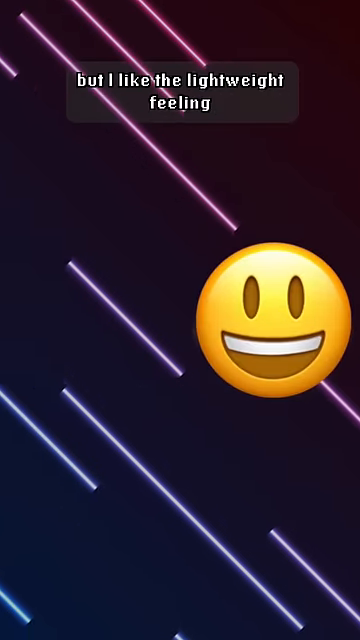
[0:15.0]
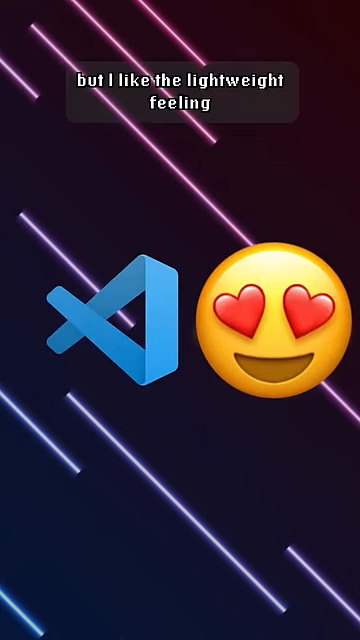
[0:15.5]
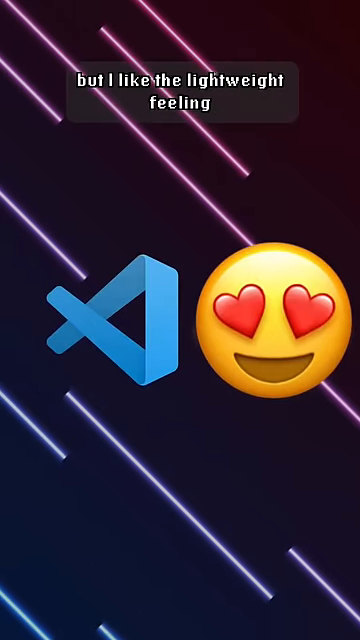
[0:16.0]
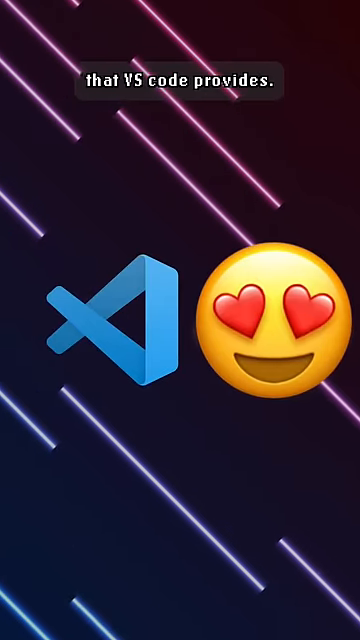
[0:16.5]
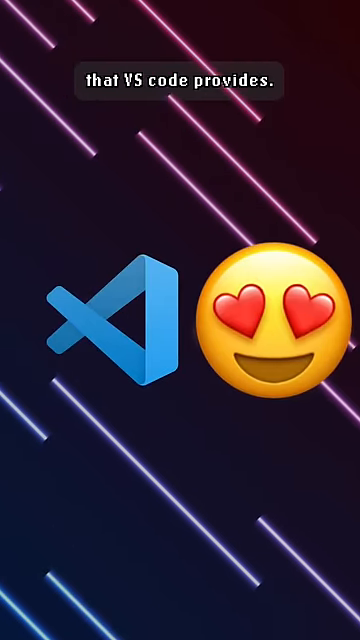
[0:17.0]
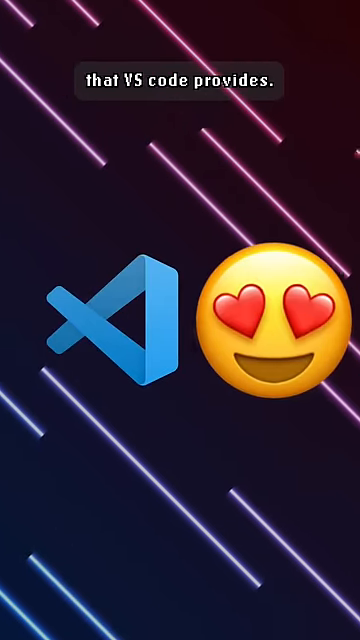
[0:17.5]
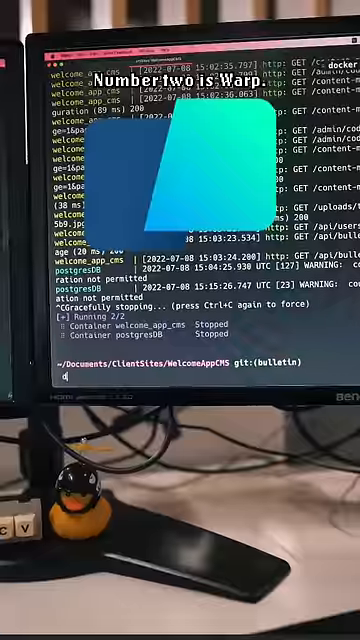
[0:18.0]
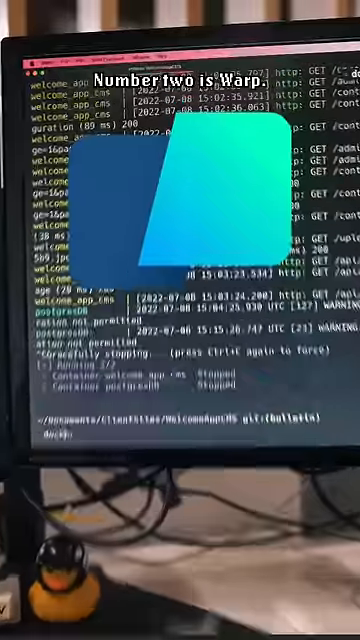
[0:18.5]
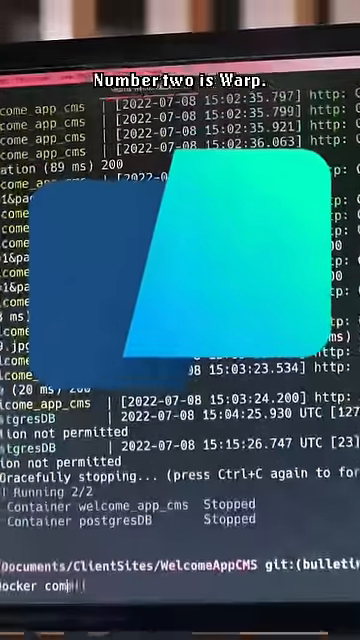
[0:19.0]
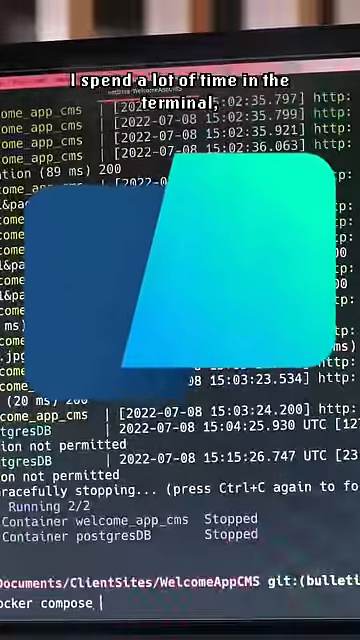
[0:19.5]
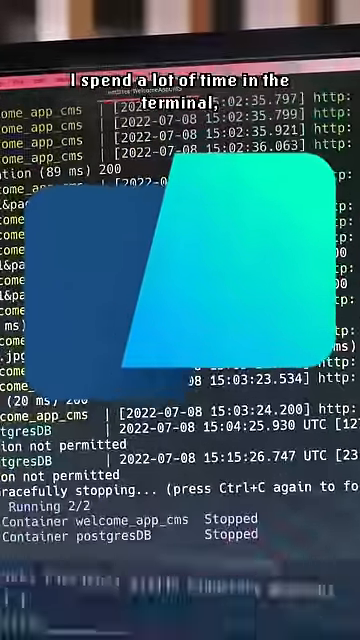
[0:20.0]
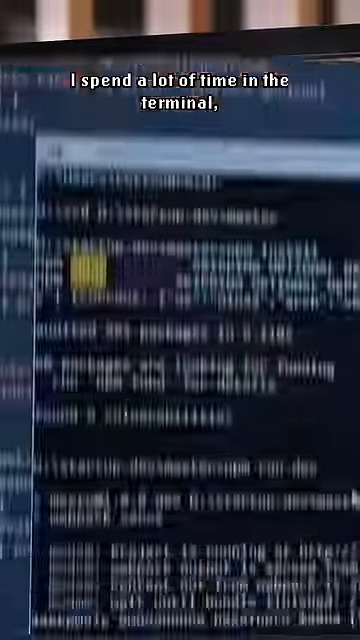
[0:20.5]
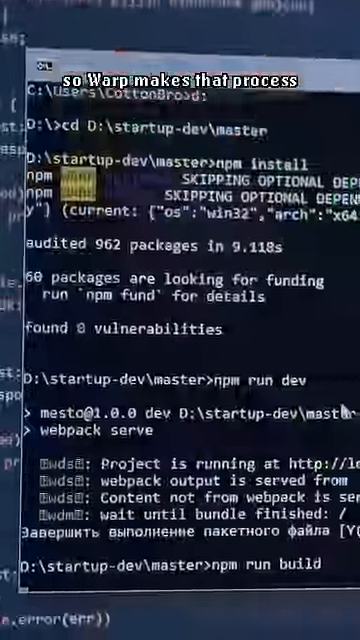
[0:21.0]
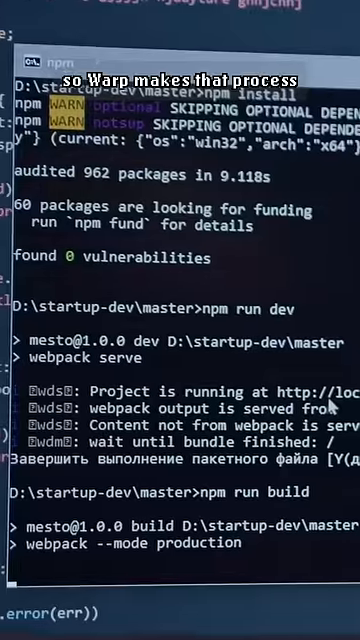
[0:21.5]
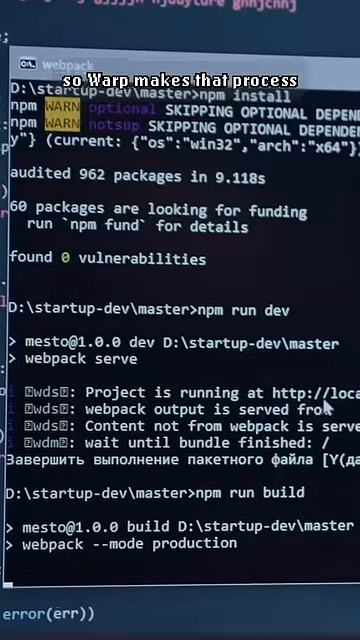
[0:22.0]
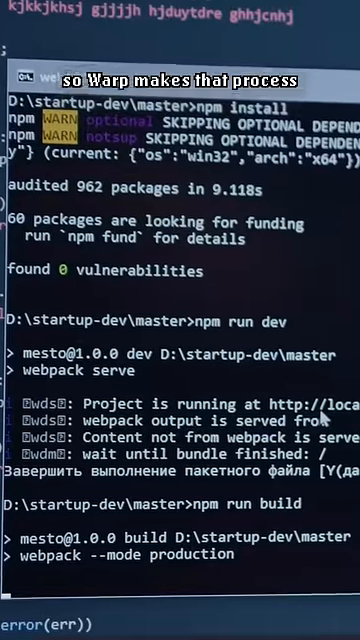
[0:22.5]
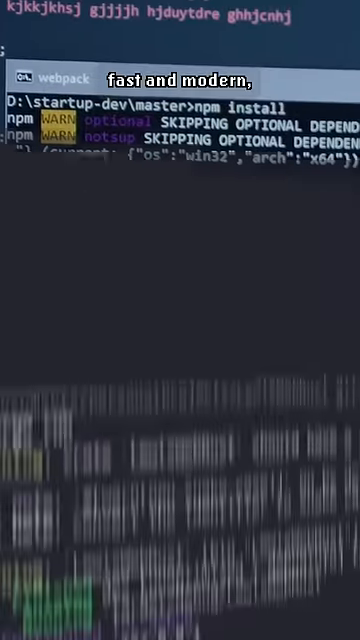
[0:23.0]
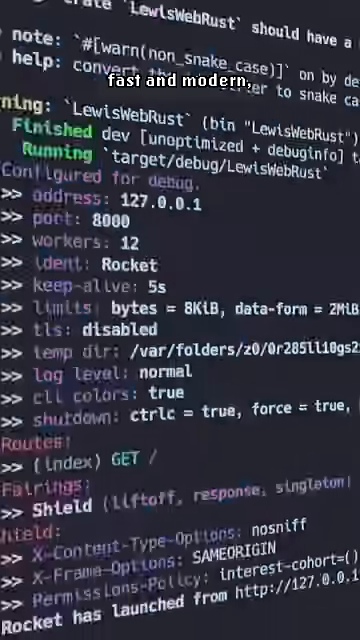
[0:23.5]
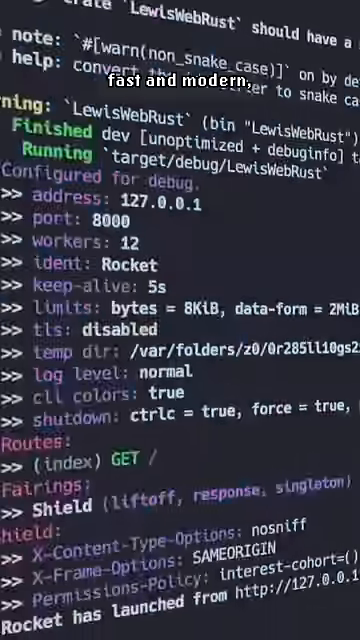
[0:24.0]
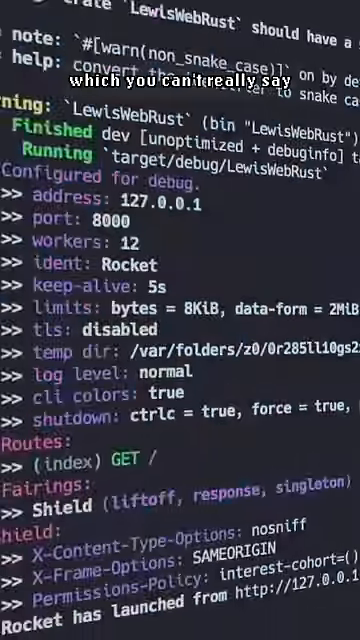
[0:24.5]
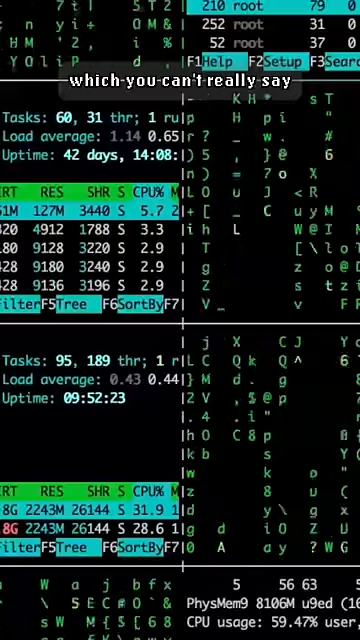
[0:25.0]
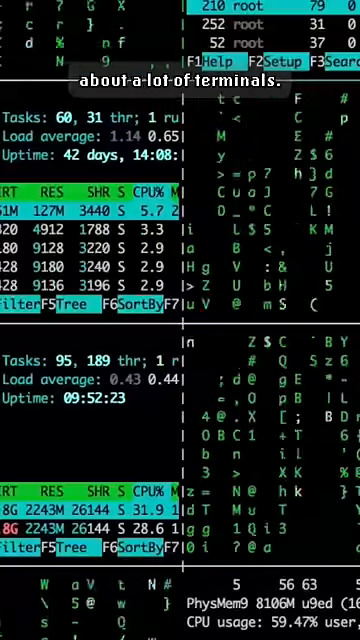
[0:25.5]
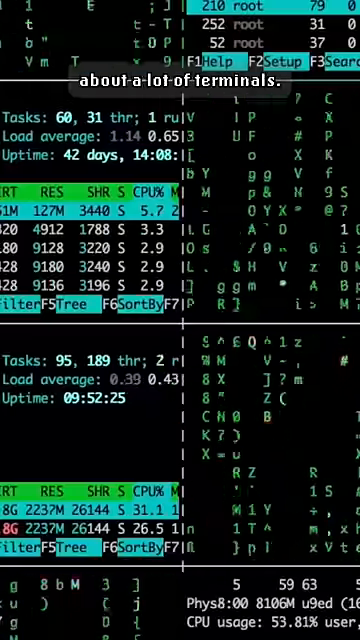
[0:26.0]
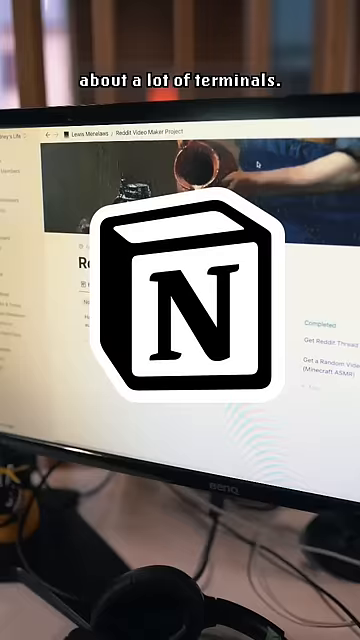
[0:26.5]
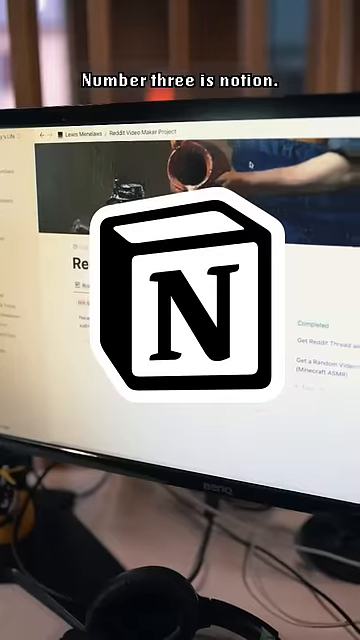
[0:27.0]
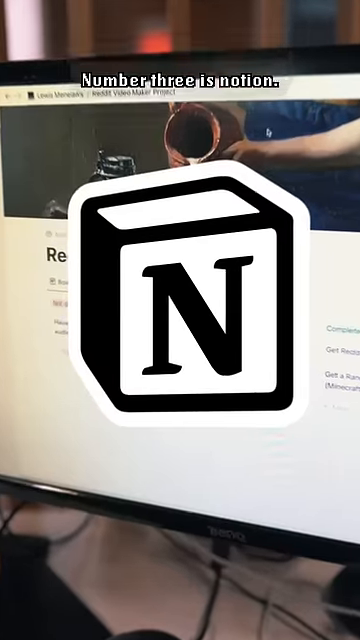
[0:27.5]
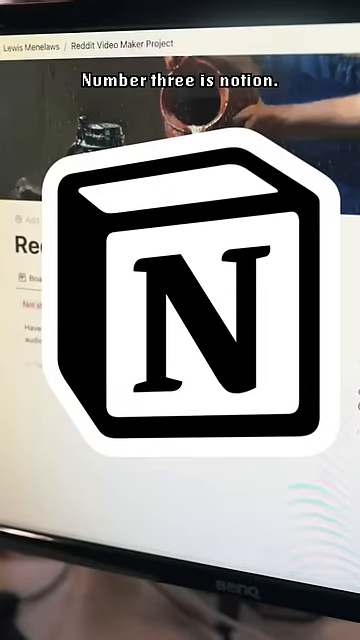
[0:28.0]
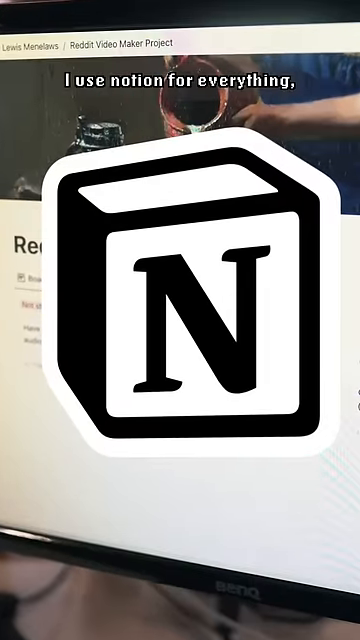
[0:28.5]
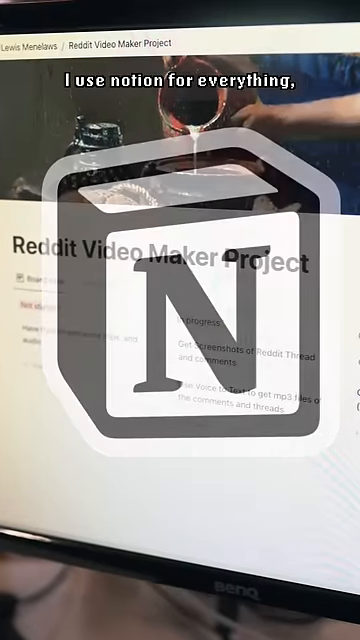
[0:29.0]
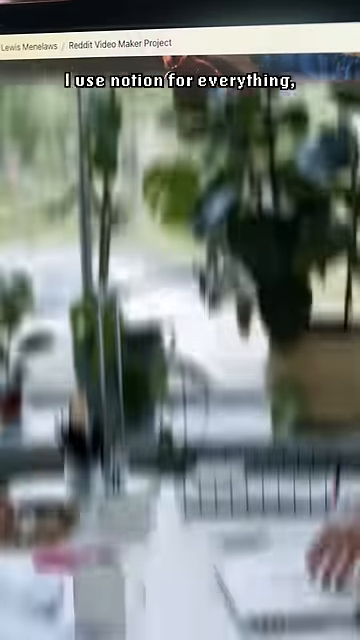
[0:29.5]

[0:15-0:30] Programming code is shown on screen, a lot of it, possibly written in HTML or Java or some other programming language.